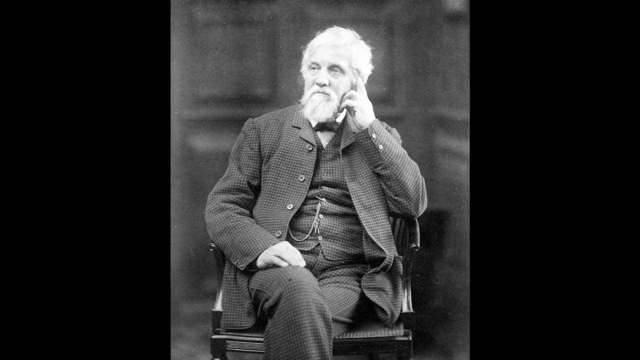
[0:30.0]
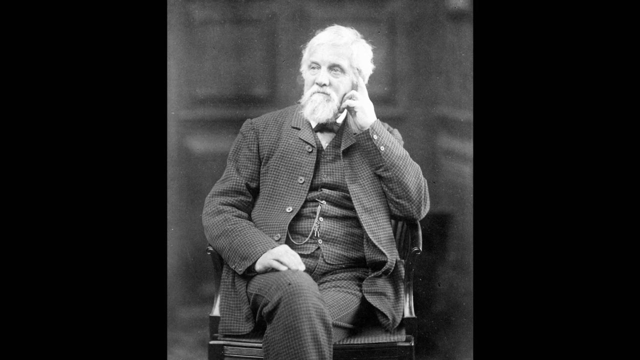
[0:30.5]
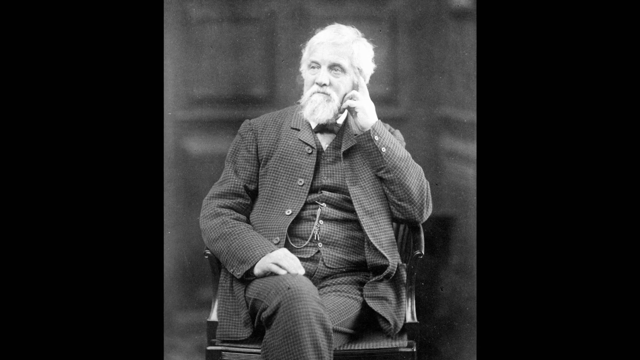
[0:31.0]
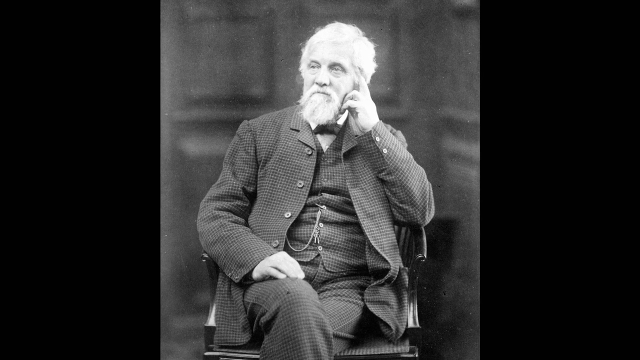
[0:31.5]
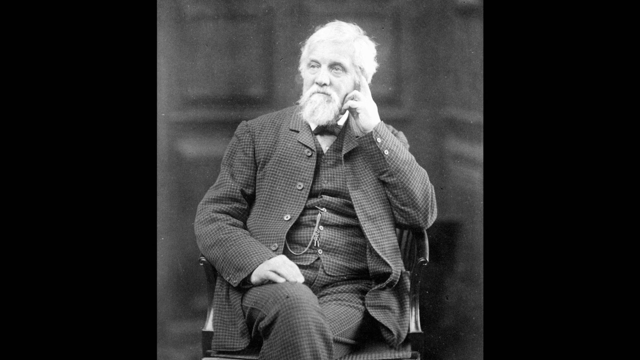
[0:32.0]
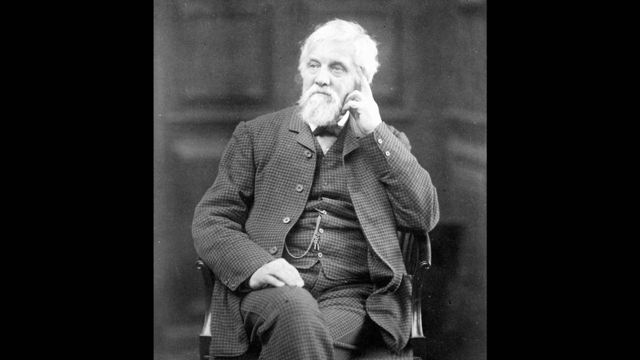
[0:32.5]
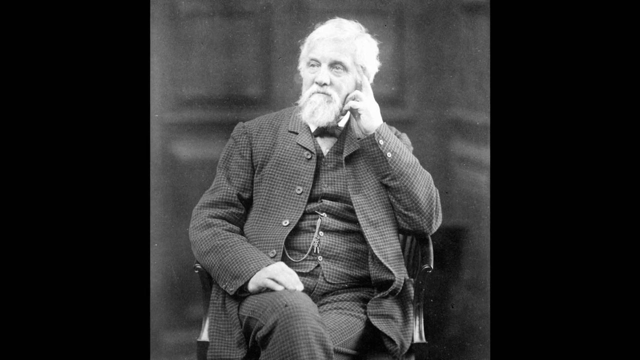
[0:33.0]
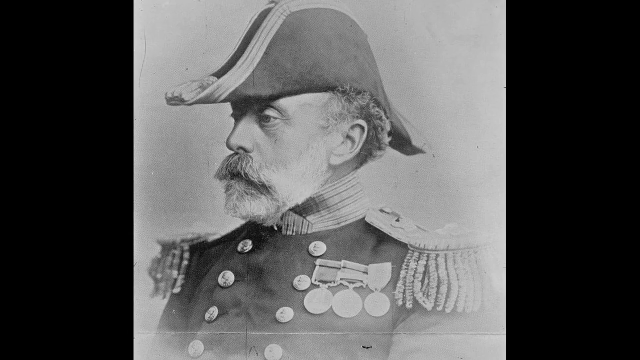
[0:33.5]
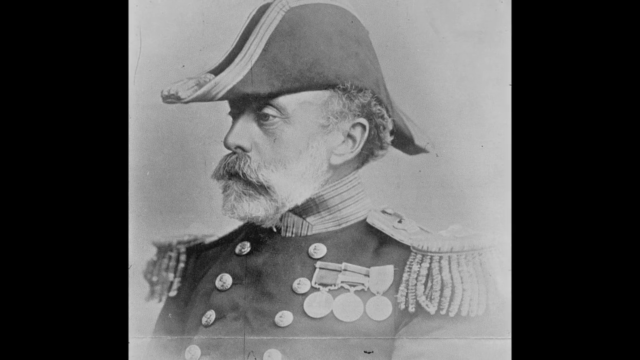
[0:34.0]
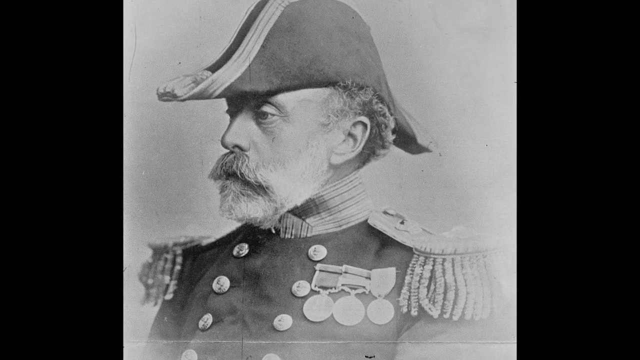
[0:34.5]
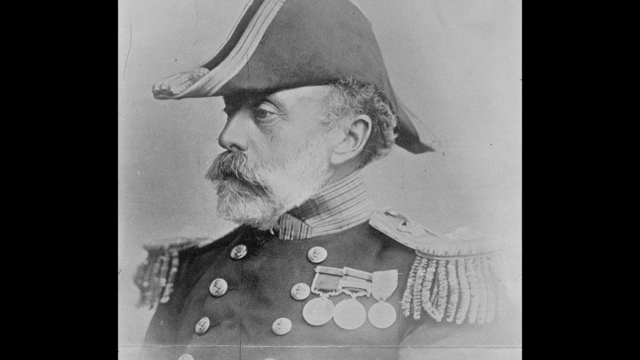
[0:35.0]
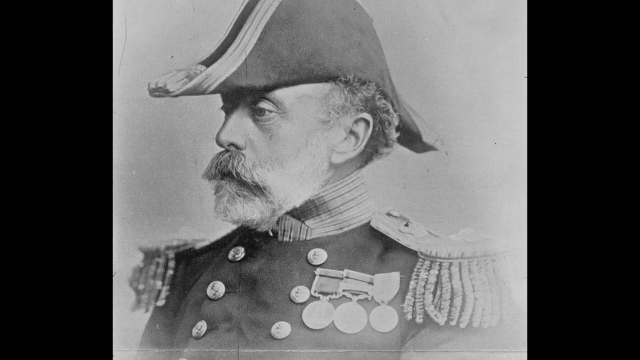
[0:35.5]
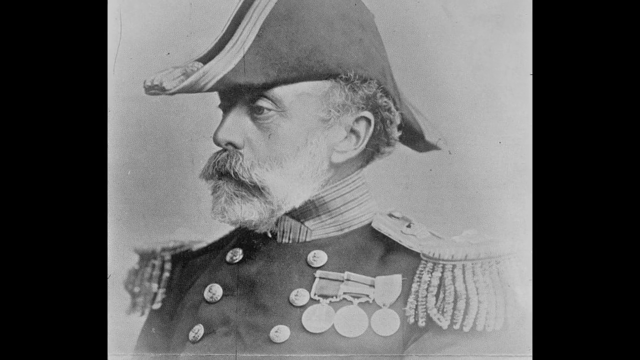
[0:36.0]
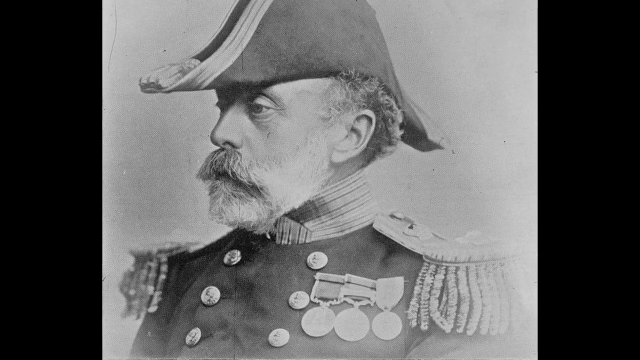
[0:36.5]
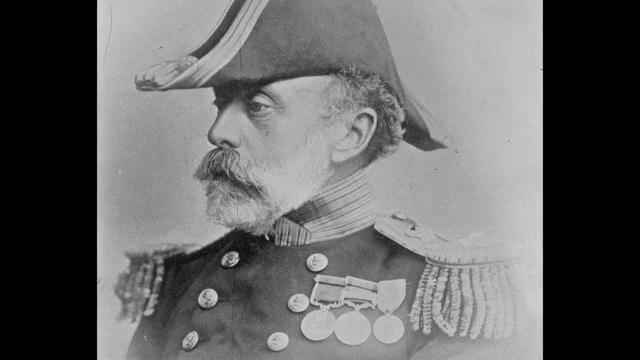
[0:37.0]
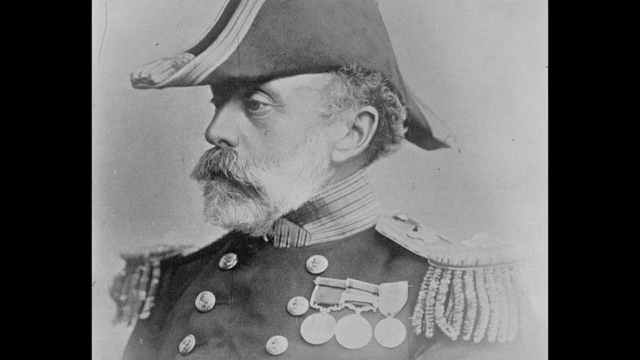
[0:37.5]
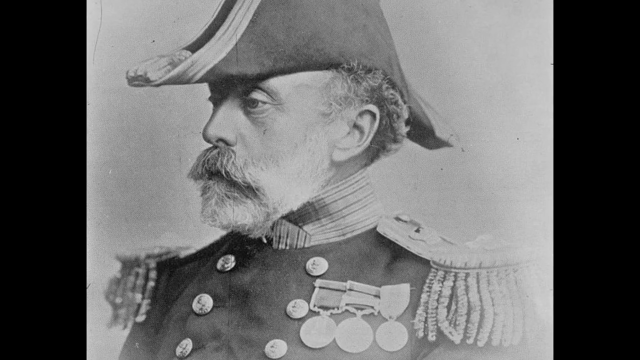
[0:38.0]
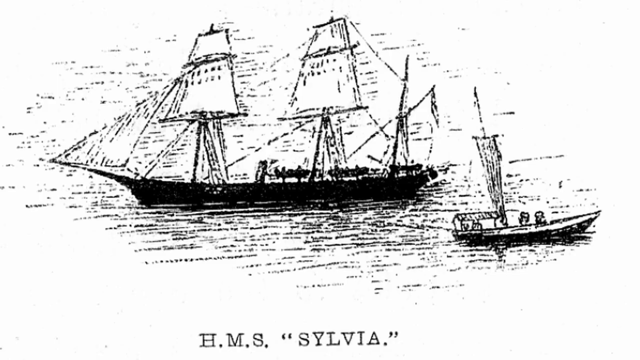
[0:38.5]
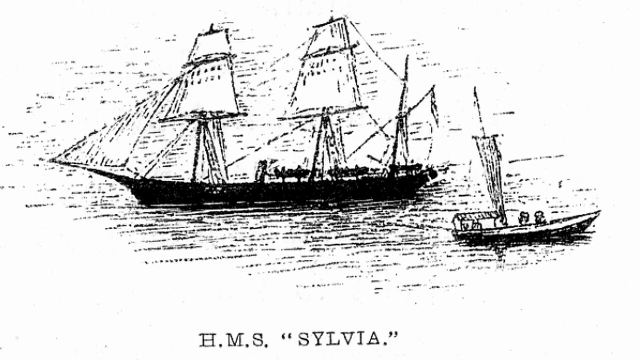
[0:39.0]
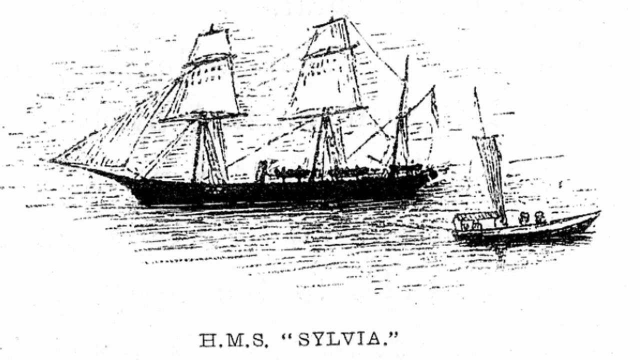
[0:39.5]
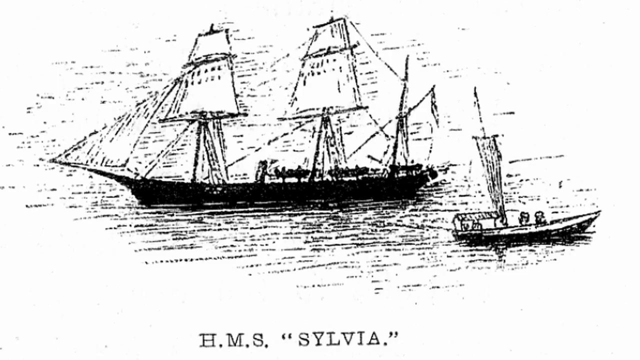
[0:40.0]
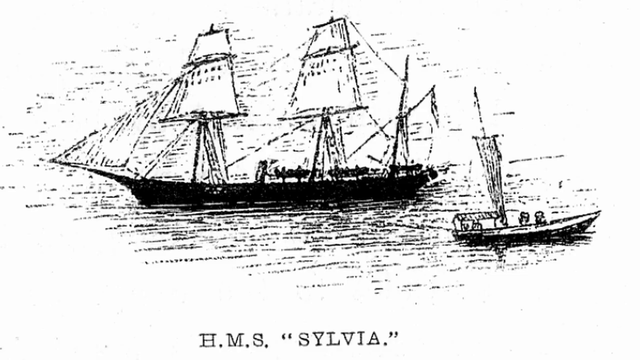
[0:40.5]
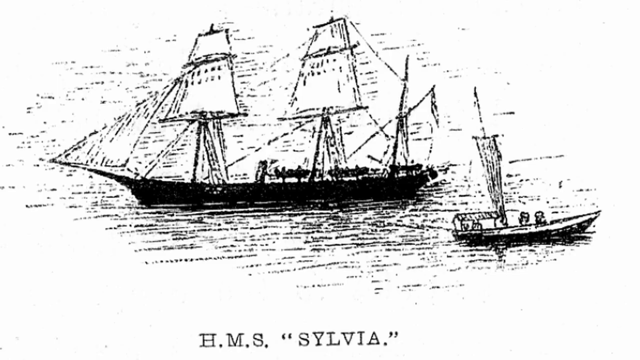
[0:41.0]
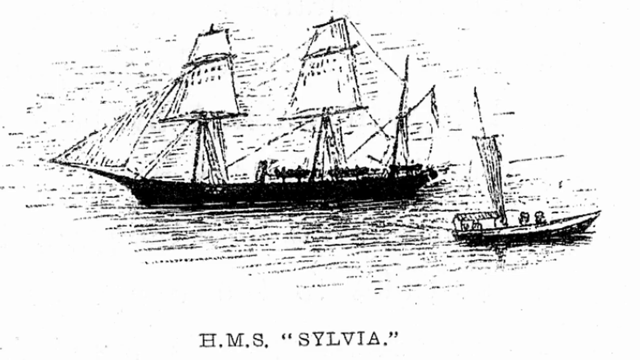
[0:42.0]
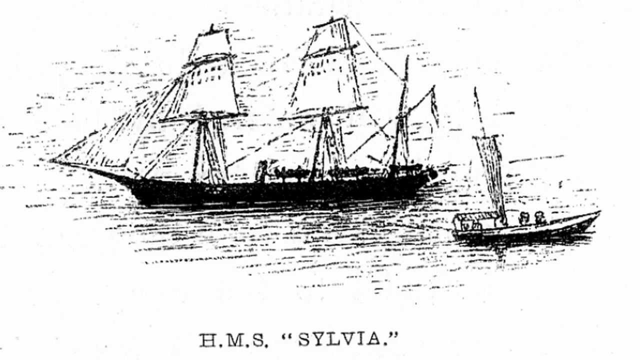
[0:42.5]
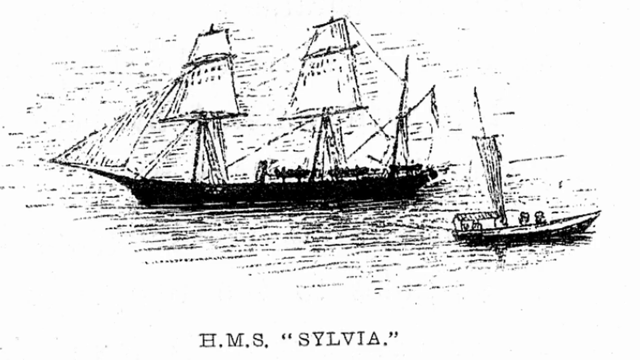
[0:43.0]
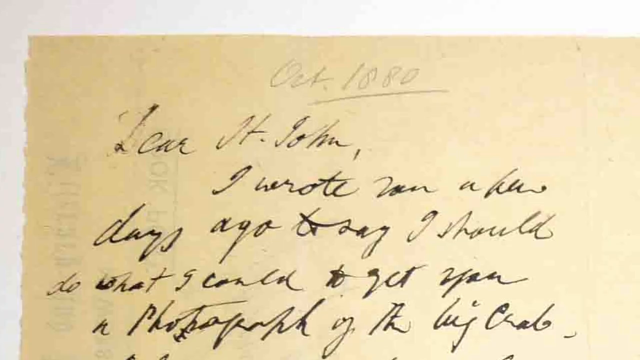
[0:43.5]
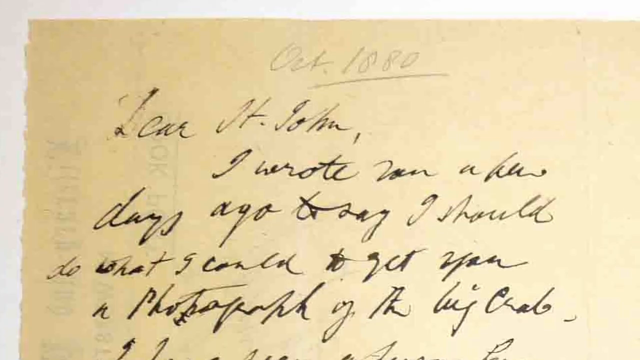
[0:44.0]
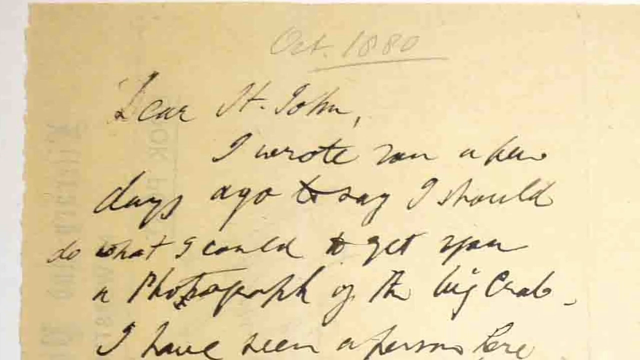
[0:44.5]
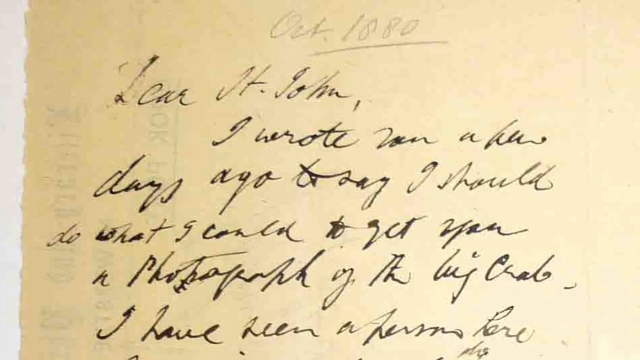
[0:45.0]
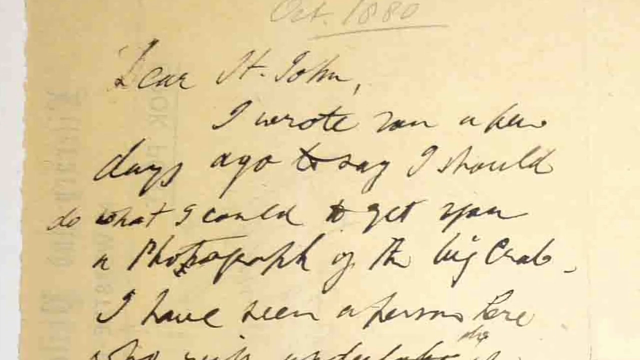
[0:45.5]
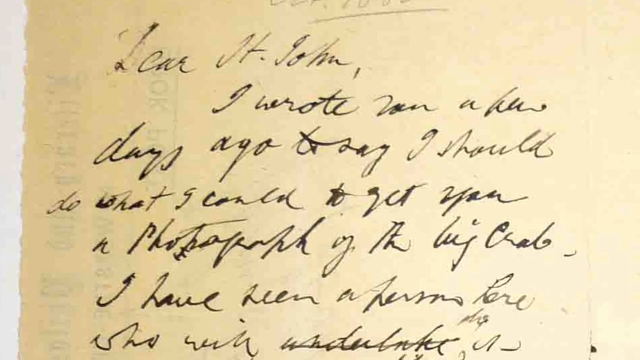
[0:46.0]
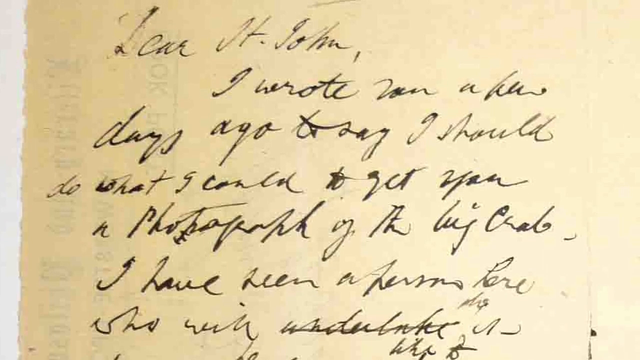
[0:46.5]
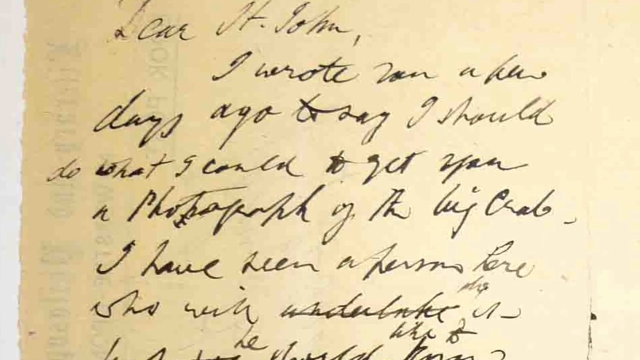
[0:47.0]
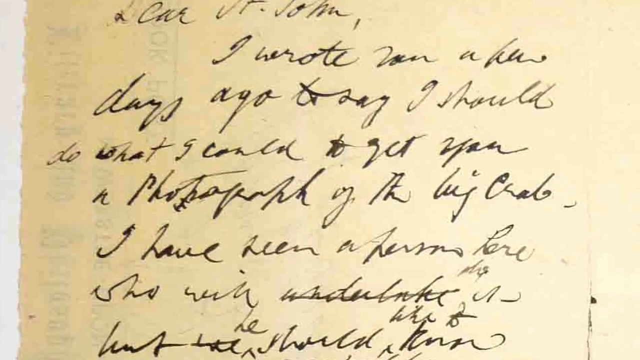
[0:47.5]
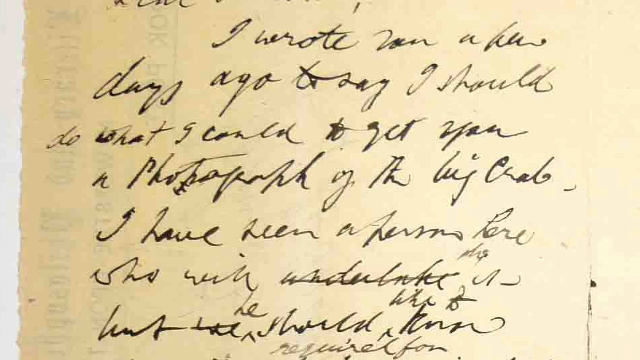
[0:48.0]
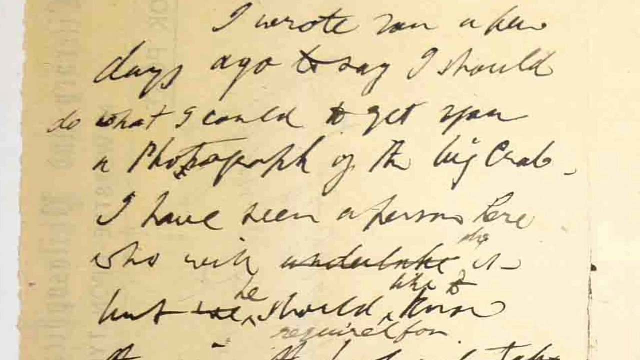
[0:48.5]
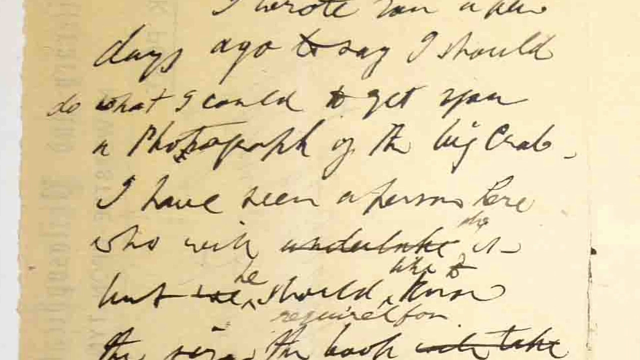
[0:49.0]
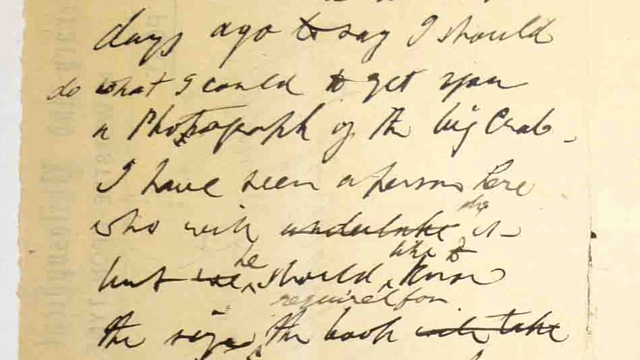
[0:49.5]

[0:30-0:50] A series of pictures is shown, with the camera zooming in. An older gentleman who looks like the KFC colonel wears a suit and a pocket watch; he has white hair and a white beard shaped like a goatee. His elbow is propped on the arm of a chair, his left fingers are folded up against the left side of his cheek, his right hand is on his right leg, and he is looking away without smiling. Another gentleman wears a Napoleon-type hat and medals; he appears to be sitting but is looking to the side, and the camera draws in on him. Drawn sailboats are shown. A handwritten letter appears, partly reading "John, I wrote this letter days ago to say I would do what I could to get you a photograph of the big crab. I have been," and is hard to read beyond that. The photos appear to be very old, possibly from the early 1920s.